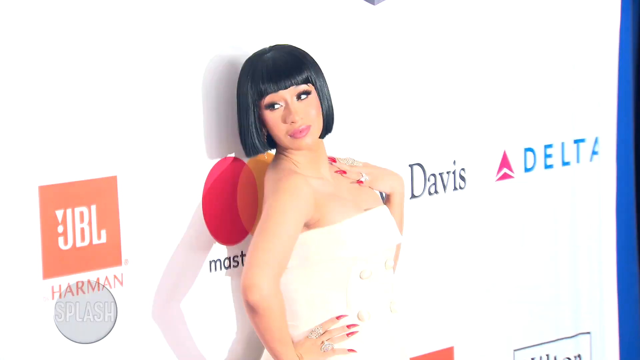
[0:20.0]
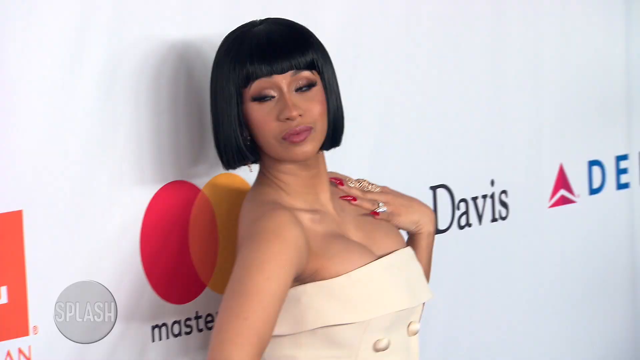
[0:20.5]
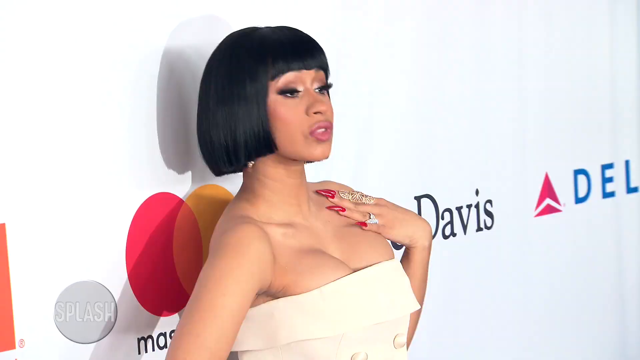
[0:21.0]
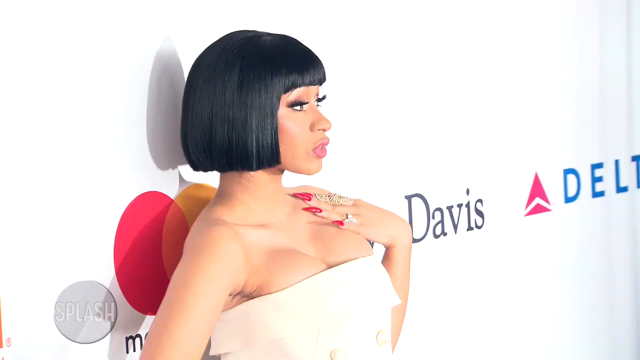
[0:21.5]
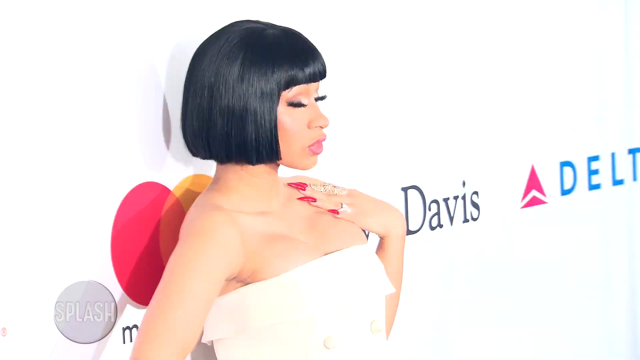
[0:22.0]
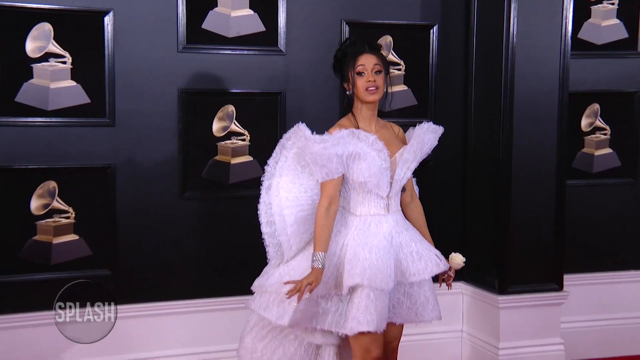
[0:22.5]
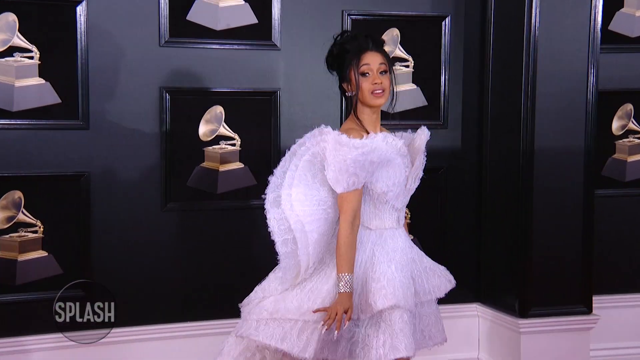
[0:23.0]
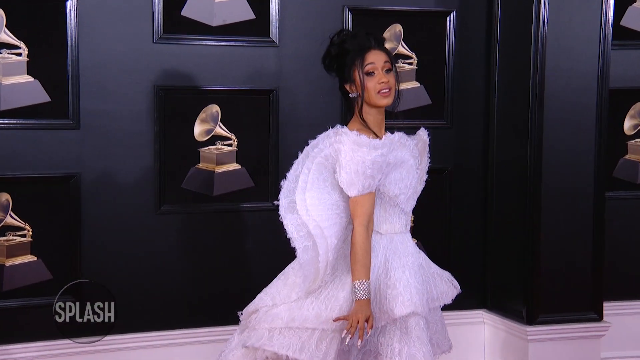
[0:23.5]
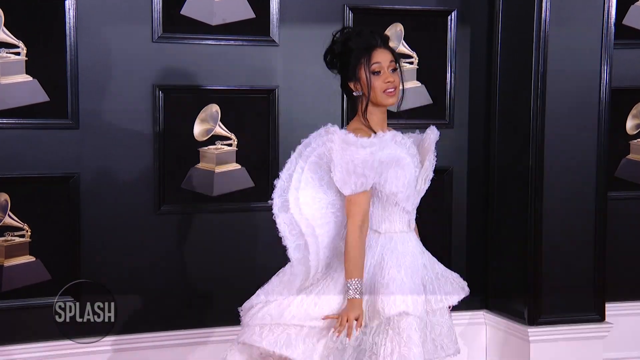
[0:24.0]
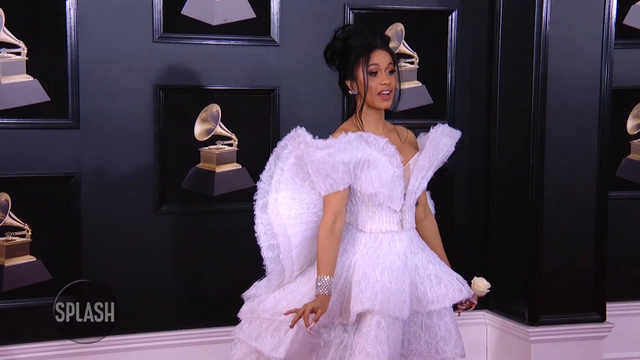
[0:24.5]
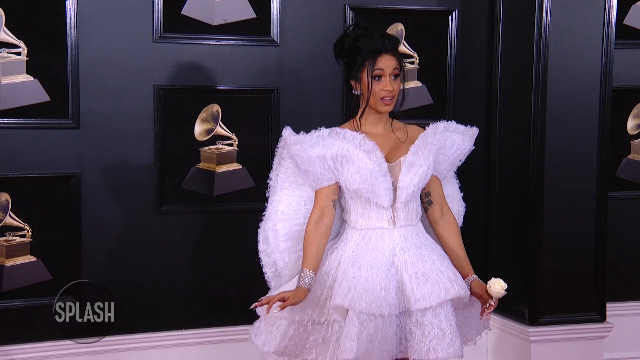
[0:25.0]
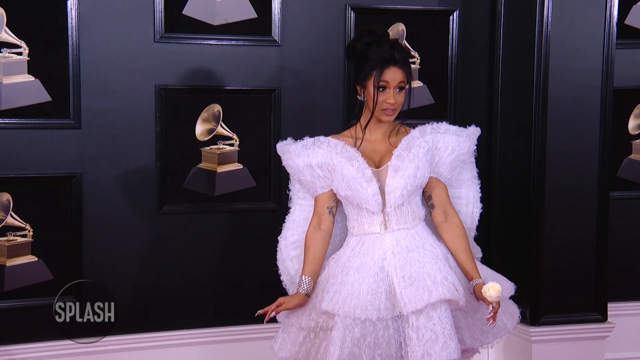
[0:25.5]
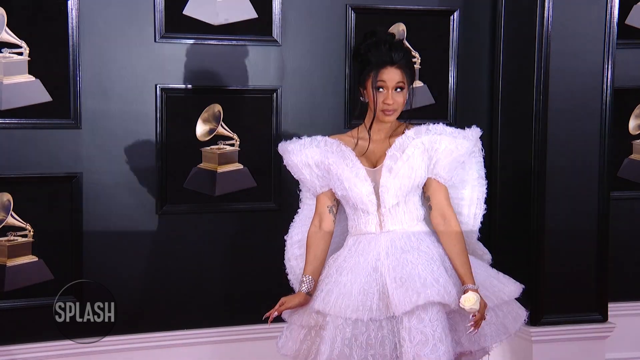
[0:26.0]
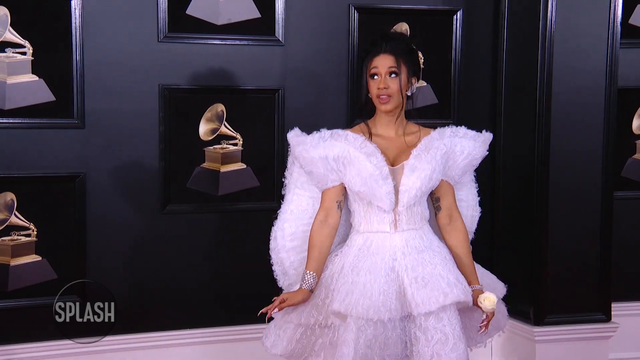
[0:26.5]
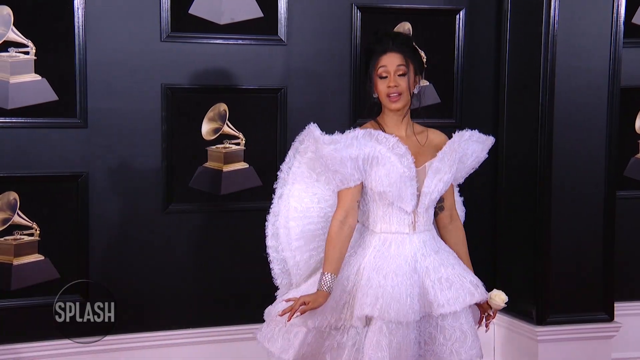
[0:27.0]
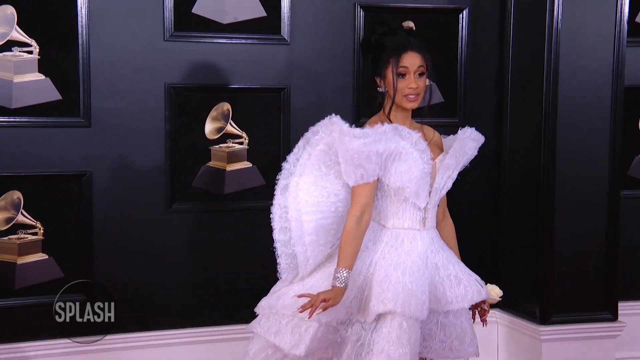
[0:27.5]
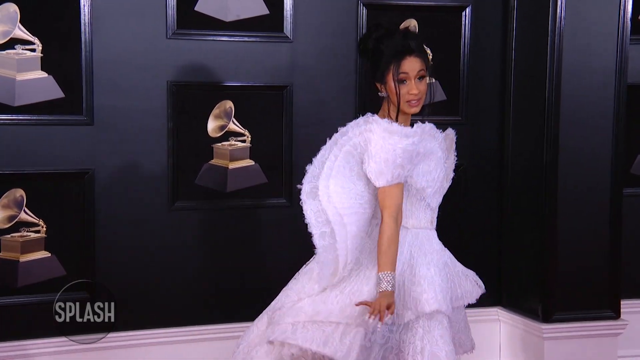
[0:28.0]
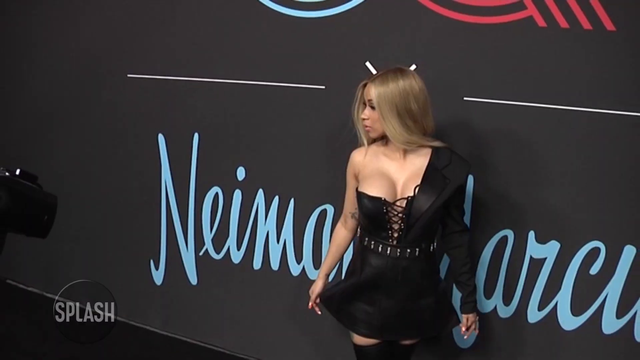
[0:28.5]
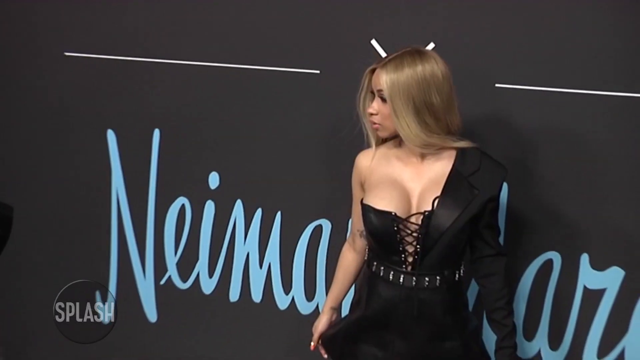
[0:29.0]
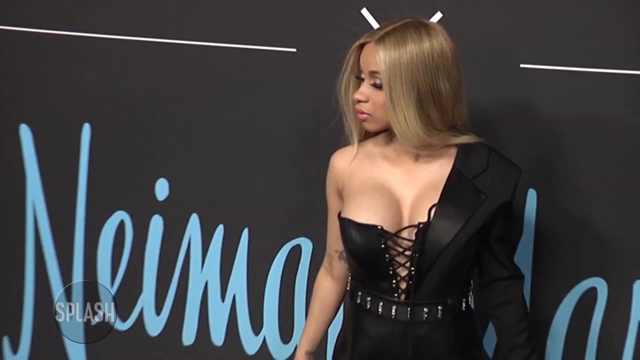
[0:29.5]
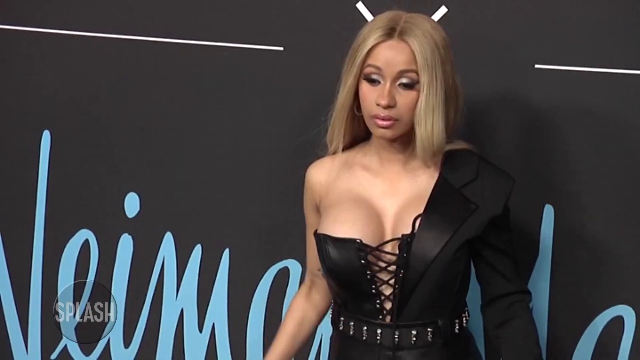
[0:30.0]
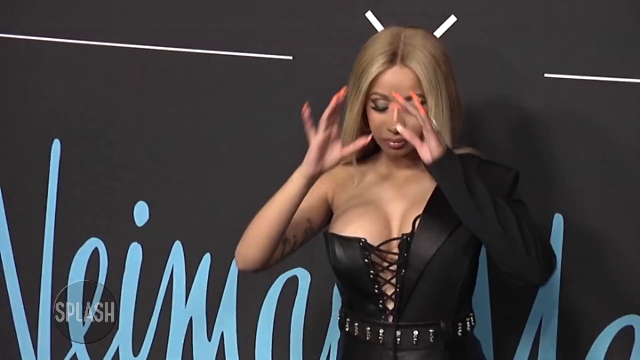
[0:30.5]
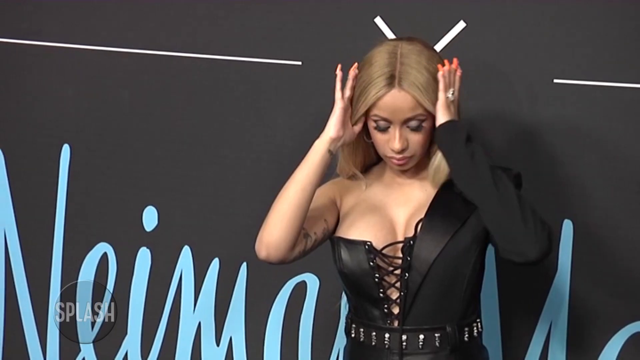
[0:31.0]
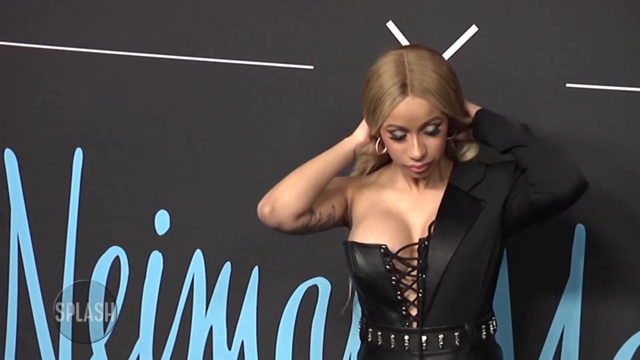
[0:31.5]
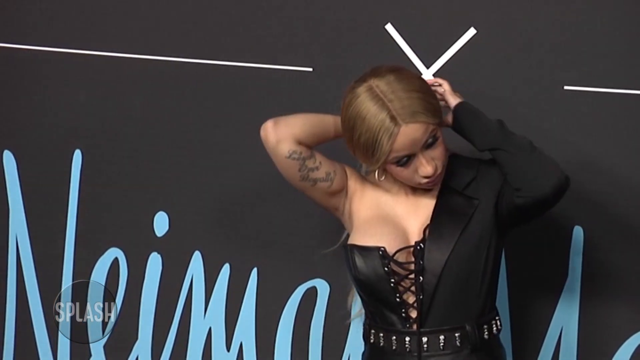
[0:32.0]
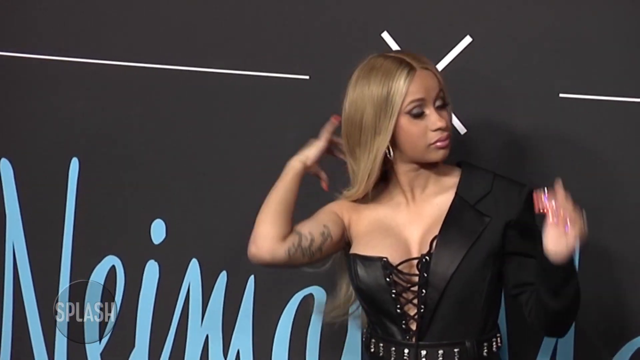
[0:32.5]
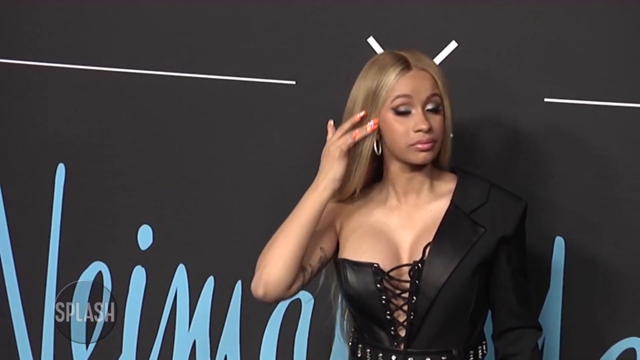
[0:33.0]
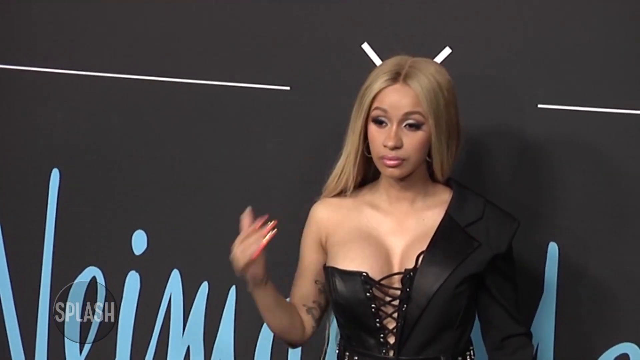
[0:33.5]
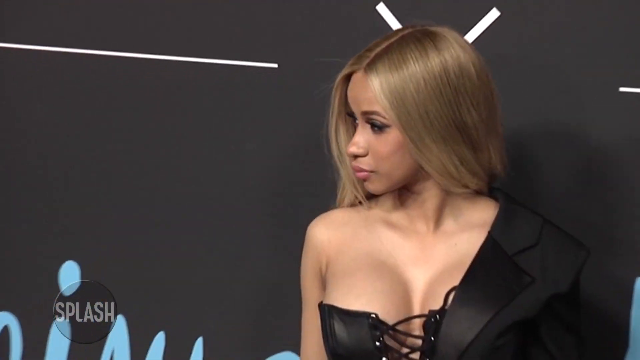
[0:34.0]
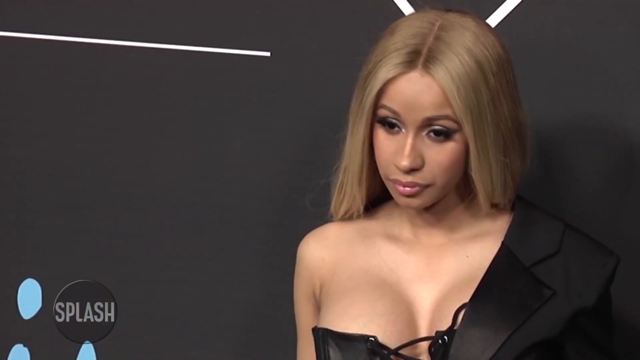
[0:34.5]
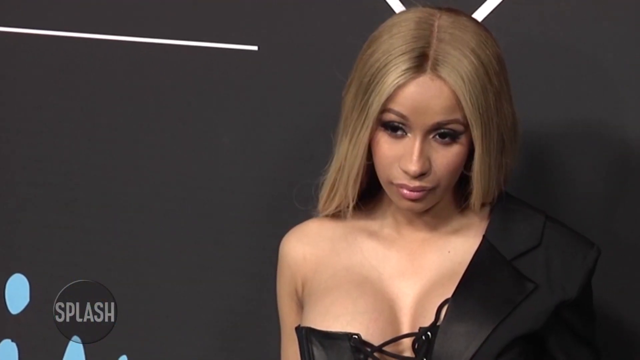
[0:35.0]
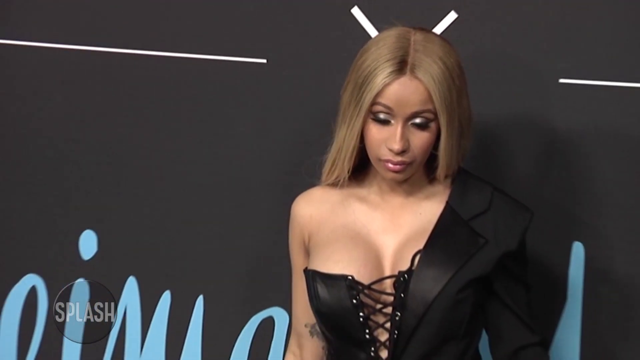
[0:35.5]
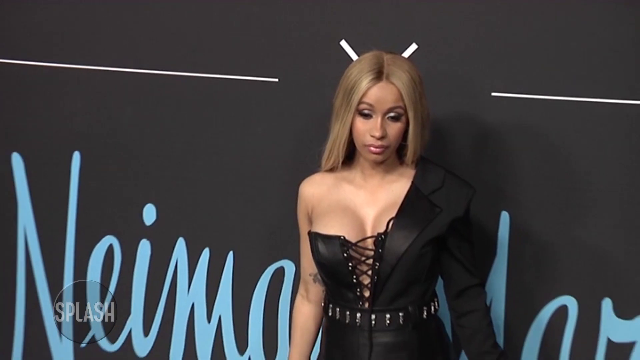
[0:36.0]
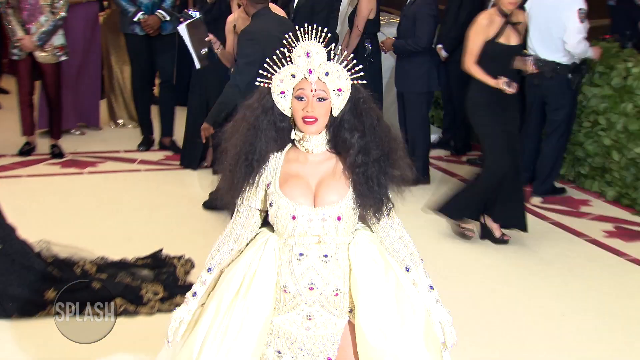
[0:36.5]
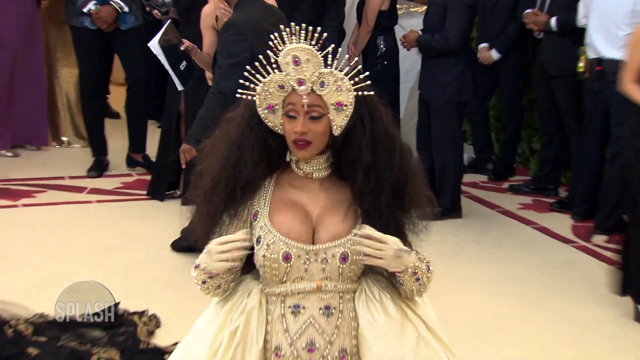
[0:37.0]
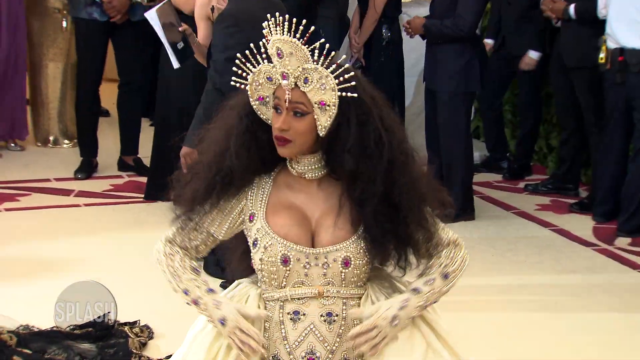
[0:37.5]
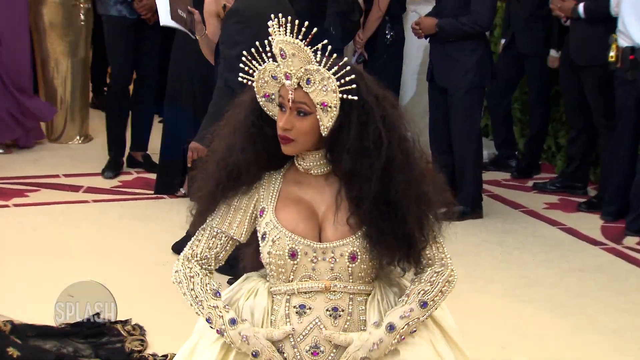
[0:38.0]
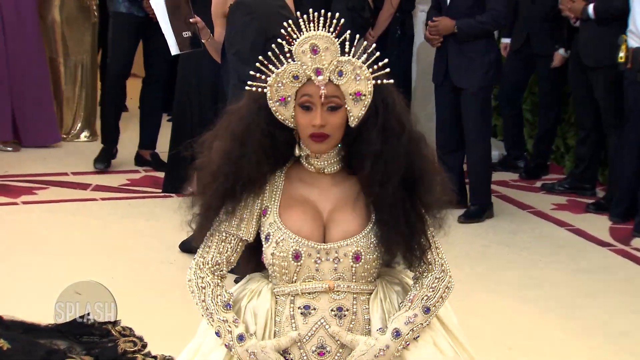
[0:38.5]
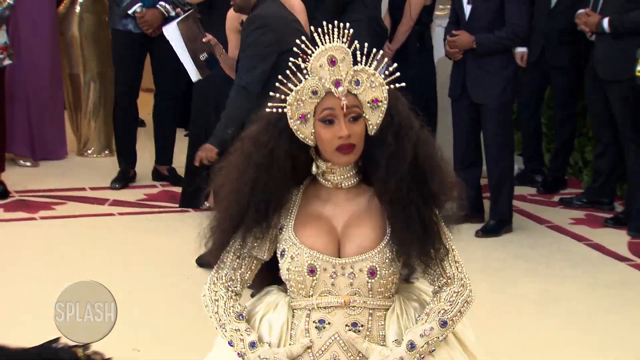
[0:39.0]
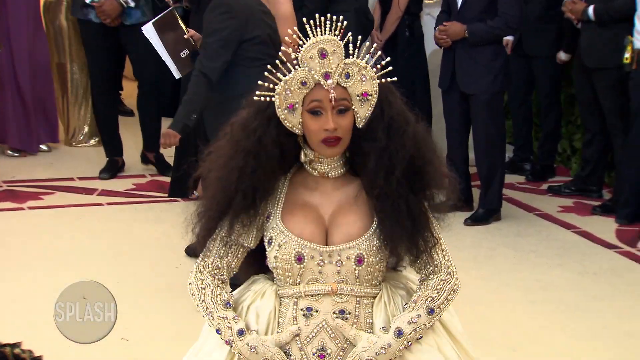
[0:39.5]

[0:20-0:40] Cardi B wears a short black bob wig. She has one hand on her waist, and her other hand, with a ring on the ring finger, is on her shoulder. She has long red nails. She stands in front of a white wall bearing the logos of JBL, Harman, Mastercard, Clive Davis and Delta, posing for the camera in a cream dress. She is then shown at another event, with a gold award topped by a trumpet behind her. She wears a fluffy white dress, holds a white rose, and has a silver bracelet on her hand; her hair is tied at the back. Next, Cardi B is at another event, again posing for pictures. She pulls her hair back; she wears a long brown wig and a black dress.